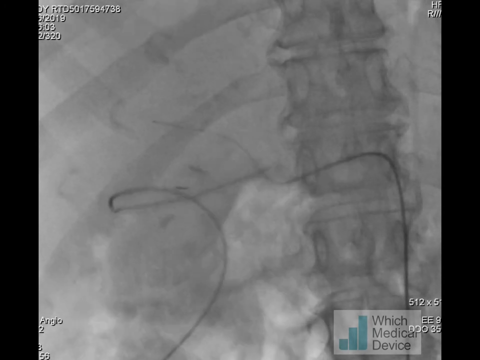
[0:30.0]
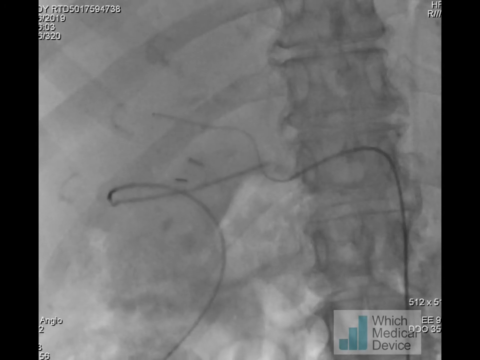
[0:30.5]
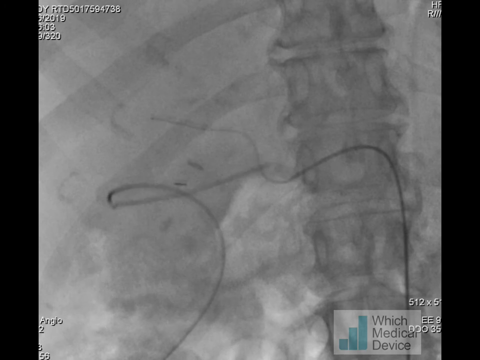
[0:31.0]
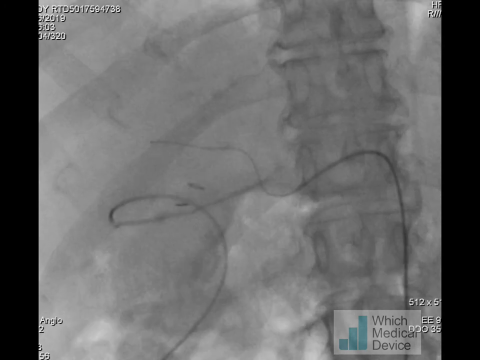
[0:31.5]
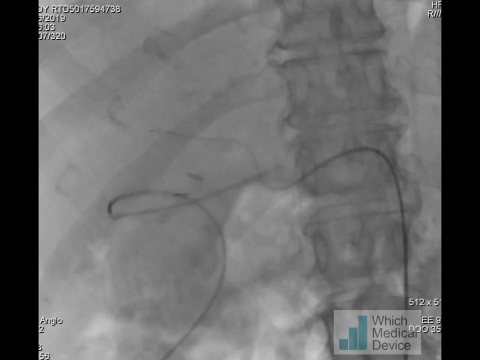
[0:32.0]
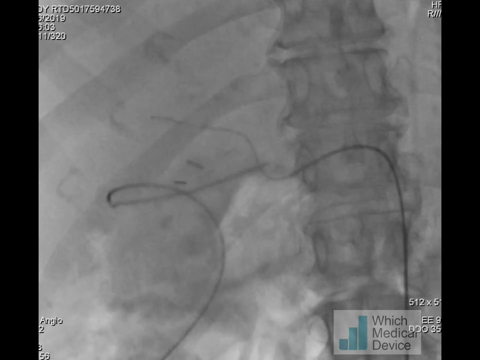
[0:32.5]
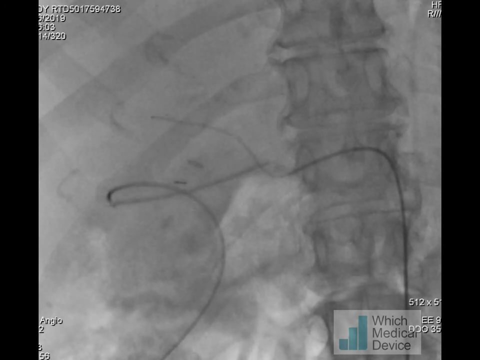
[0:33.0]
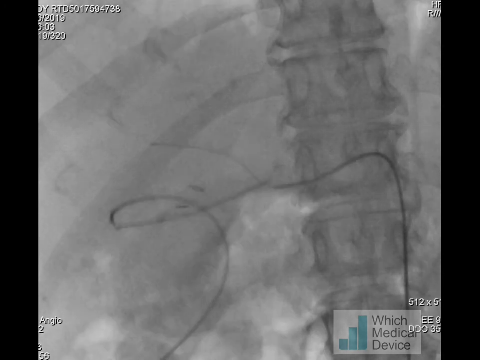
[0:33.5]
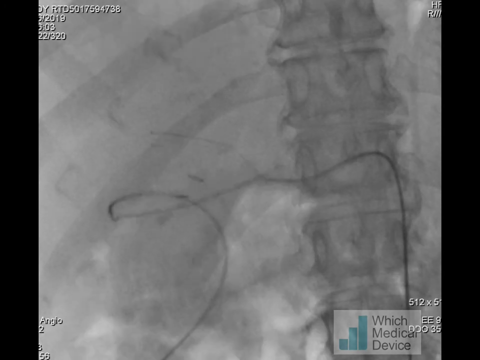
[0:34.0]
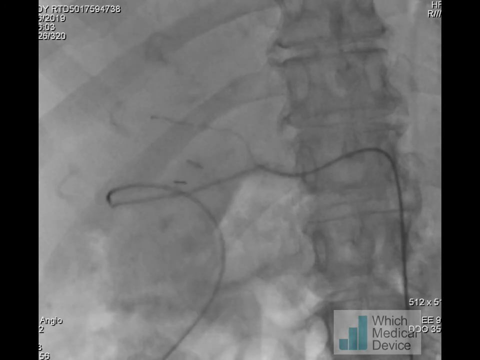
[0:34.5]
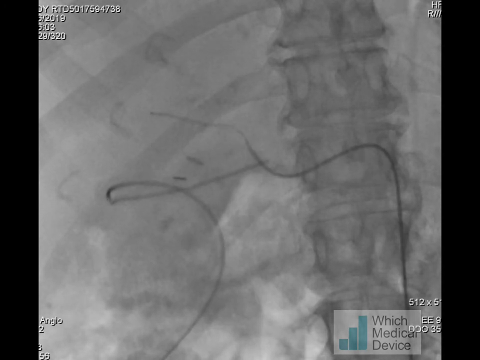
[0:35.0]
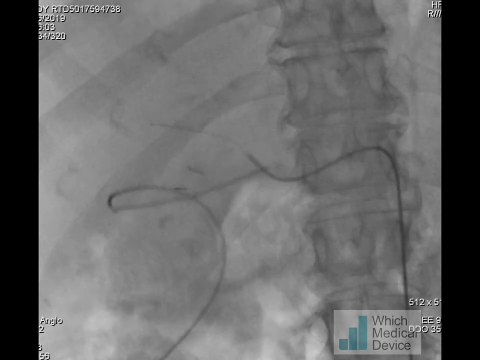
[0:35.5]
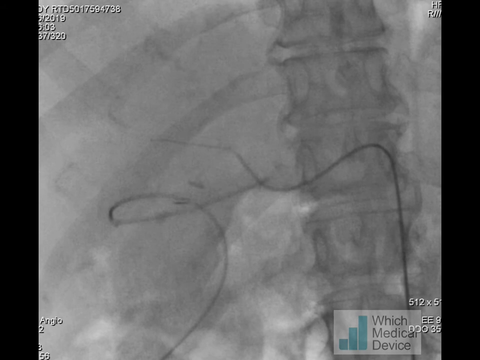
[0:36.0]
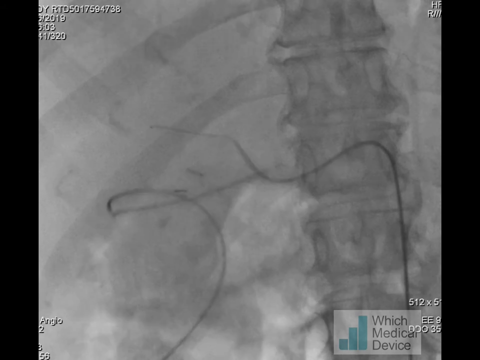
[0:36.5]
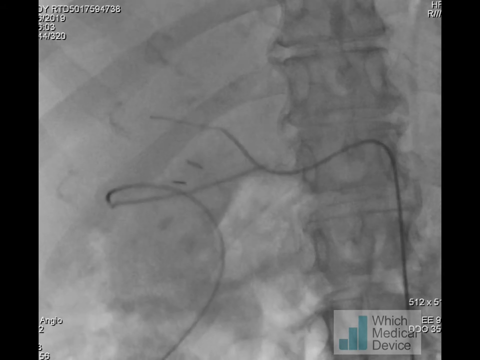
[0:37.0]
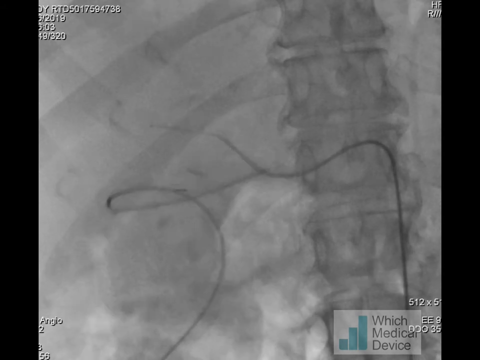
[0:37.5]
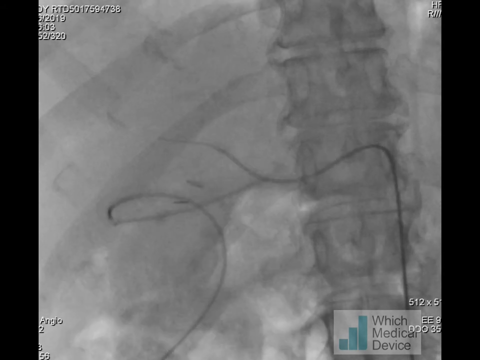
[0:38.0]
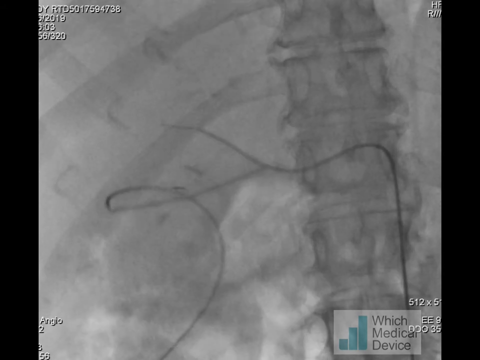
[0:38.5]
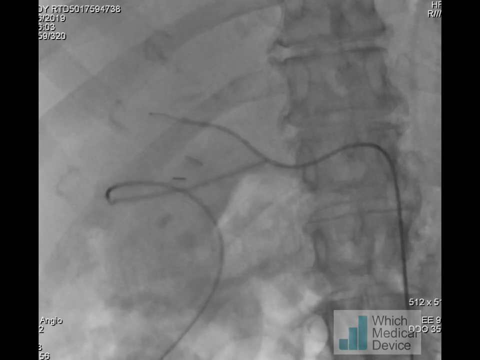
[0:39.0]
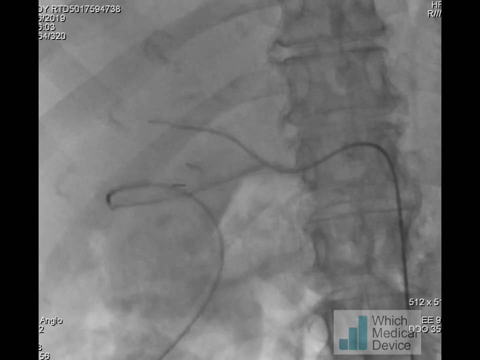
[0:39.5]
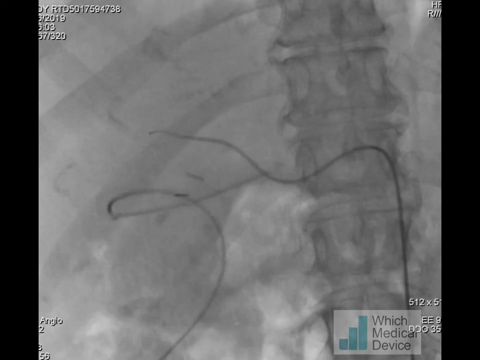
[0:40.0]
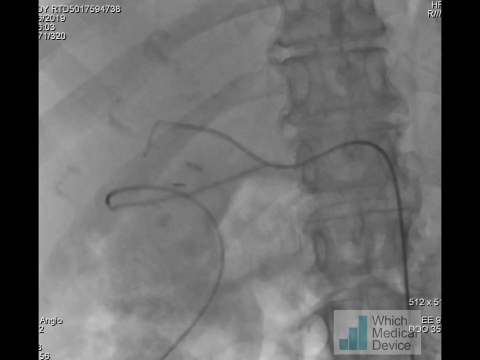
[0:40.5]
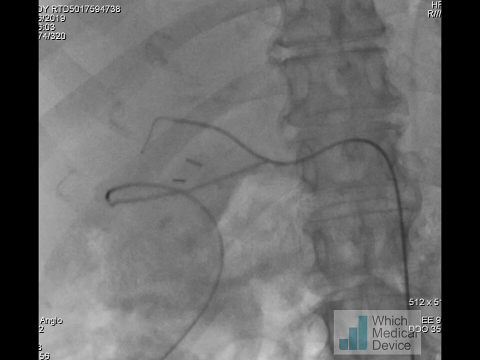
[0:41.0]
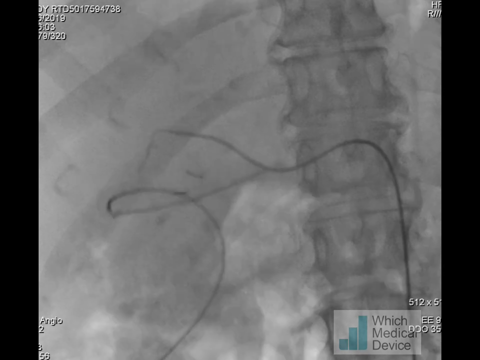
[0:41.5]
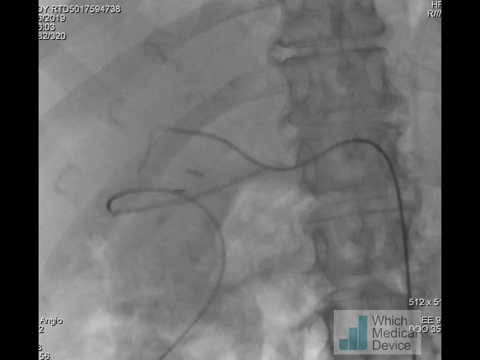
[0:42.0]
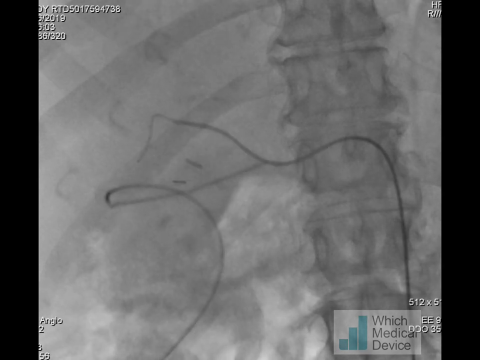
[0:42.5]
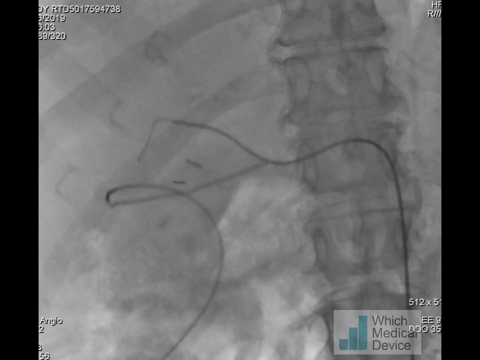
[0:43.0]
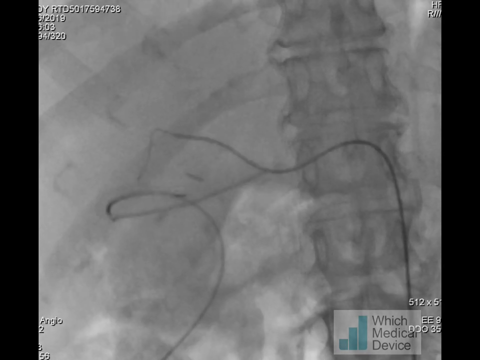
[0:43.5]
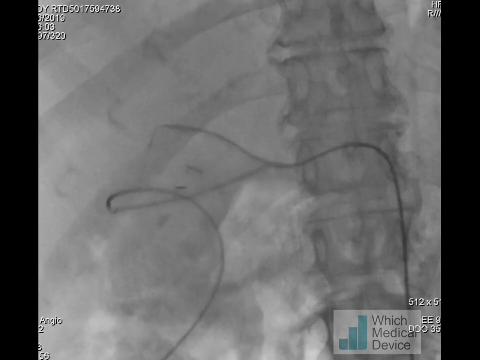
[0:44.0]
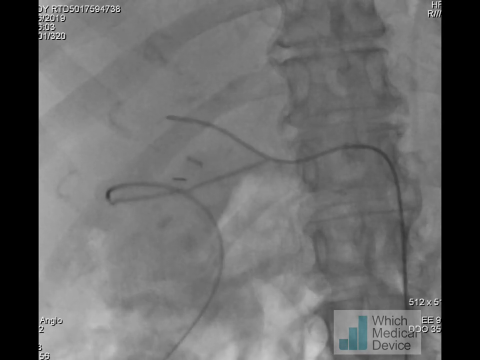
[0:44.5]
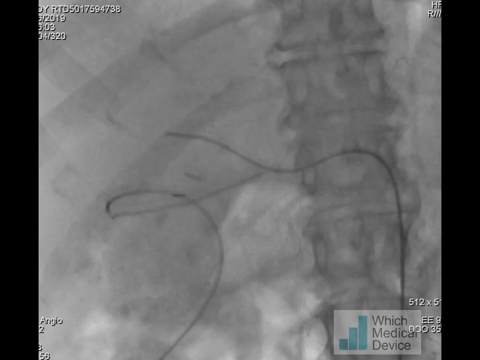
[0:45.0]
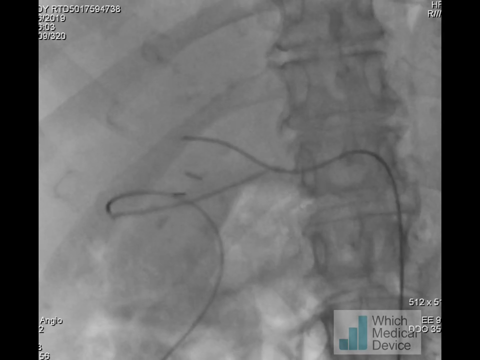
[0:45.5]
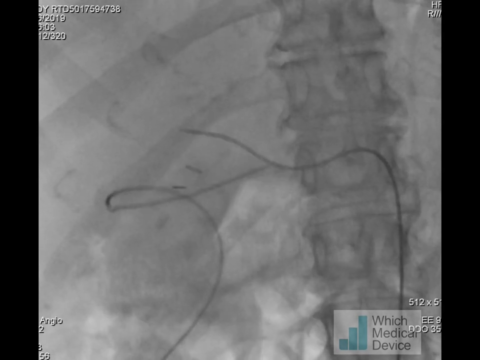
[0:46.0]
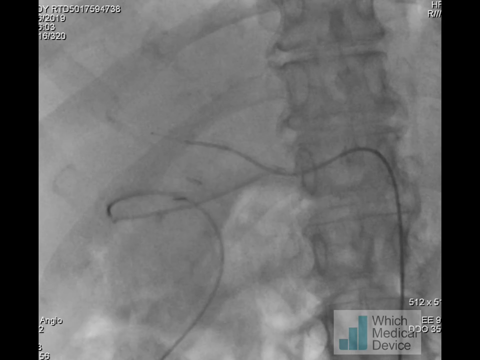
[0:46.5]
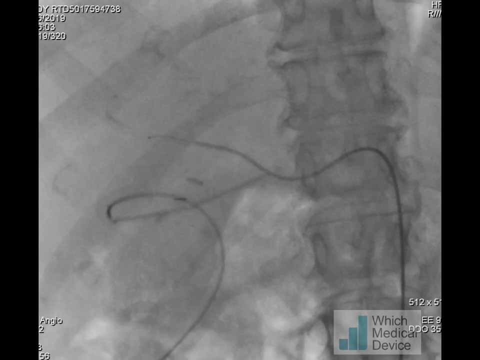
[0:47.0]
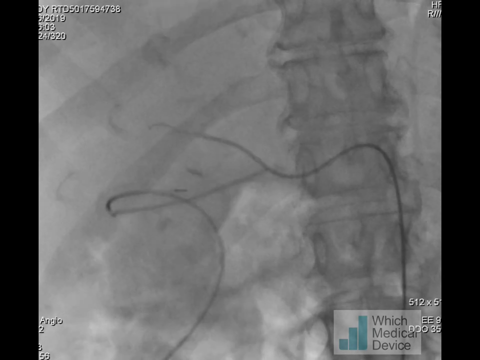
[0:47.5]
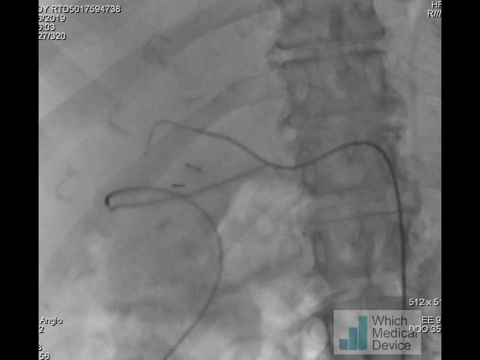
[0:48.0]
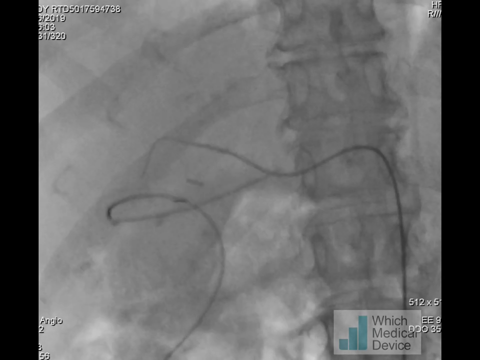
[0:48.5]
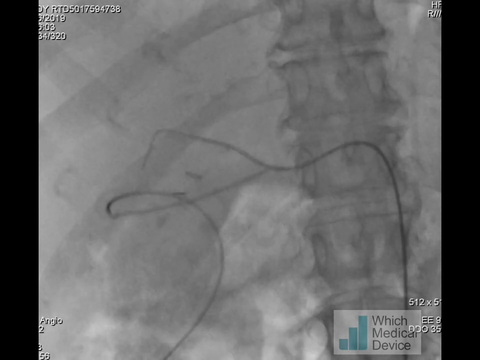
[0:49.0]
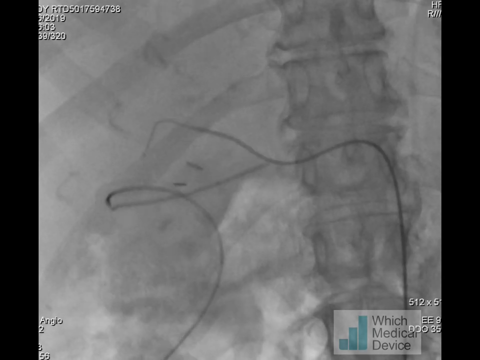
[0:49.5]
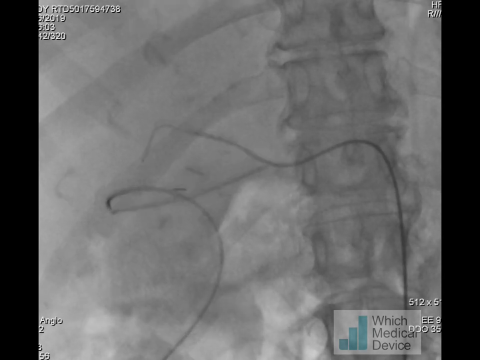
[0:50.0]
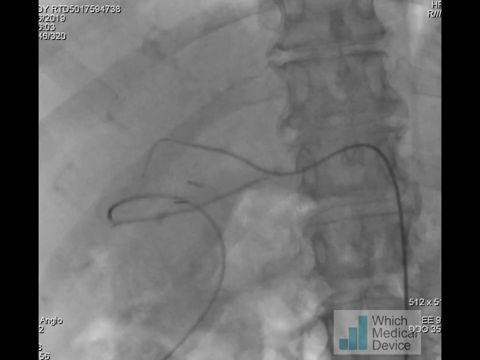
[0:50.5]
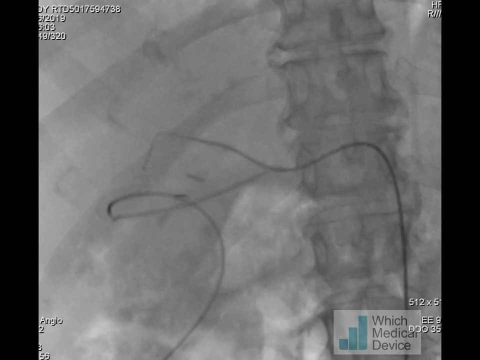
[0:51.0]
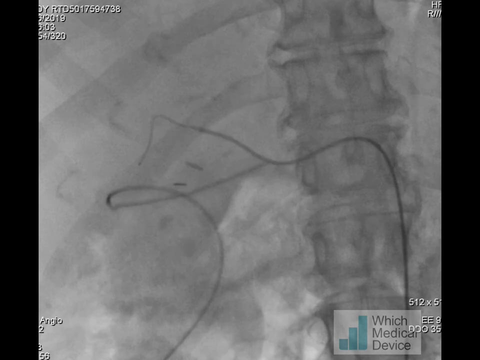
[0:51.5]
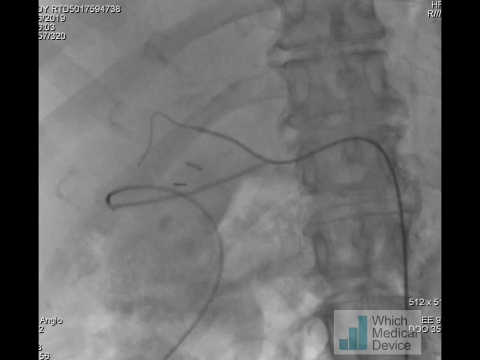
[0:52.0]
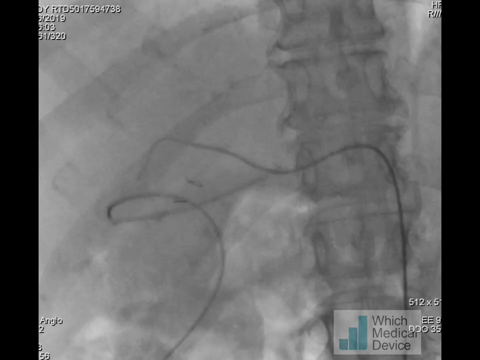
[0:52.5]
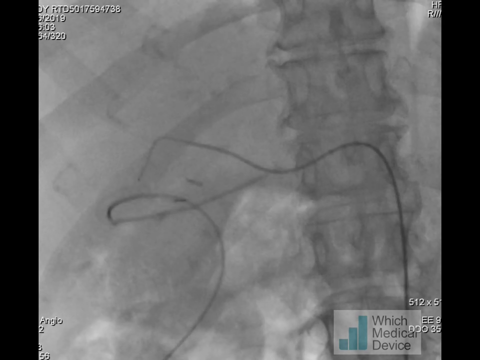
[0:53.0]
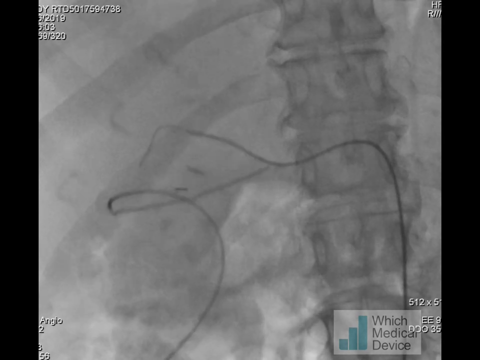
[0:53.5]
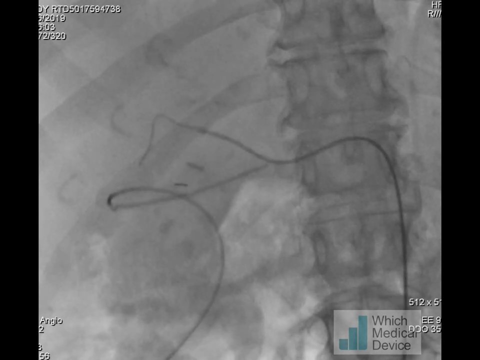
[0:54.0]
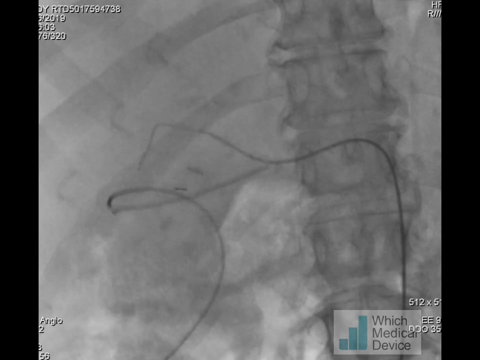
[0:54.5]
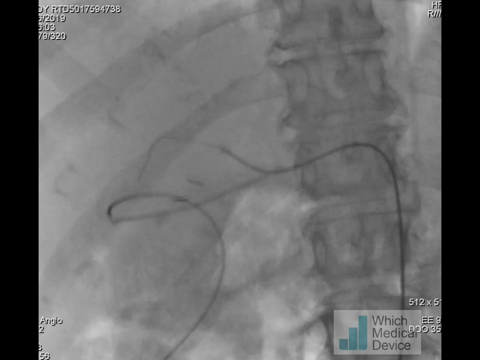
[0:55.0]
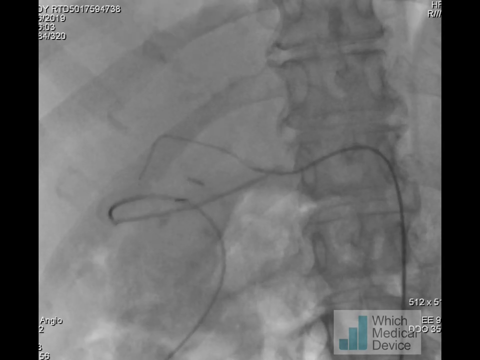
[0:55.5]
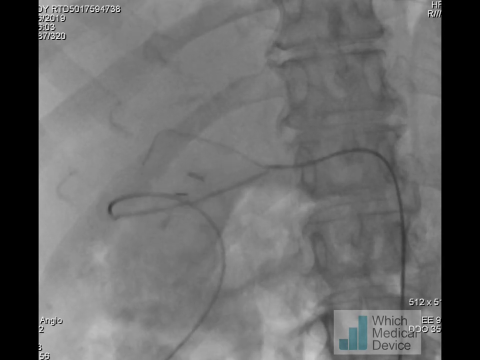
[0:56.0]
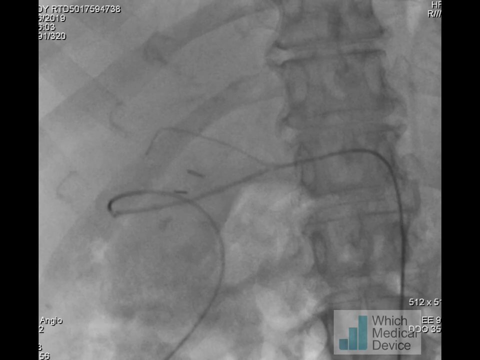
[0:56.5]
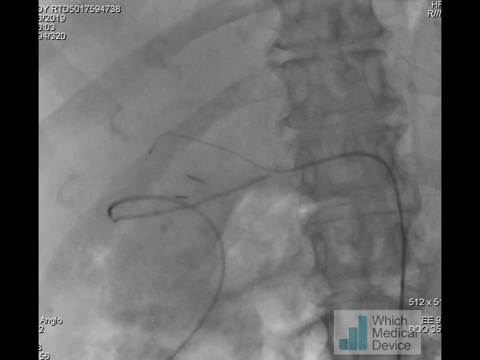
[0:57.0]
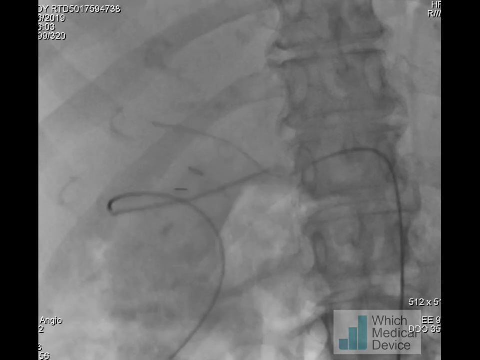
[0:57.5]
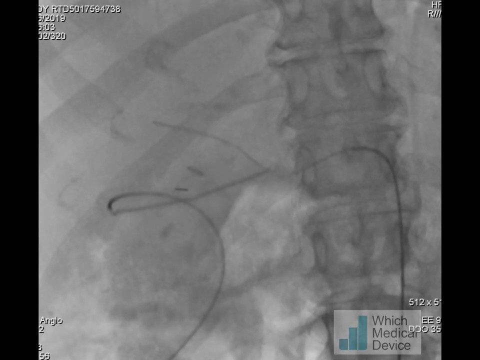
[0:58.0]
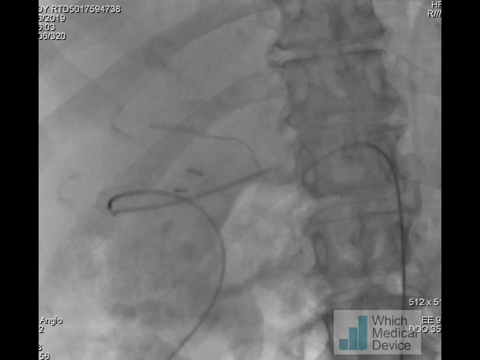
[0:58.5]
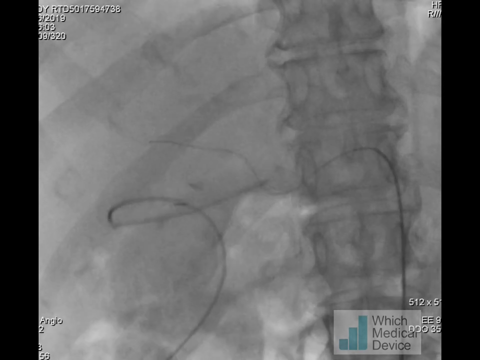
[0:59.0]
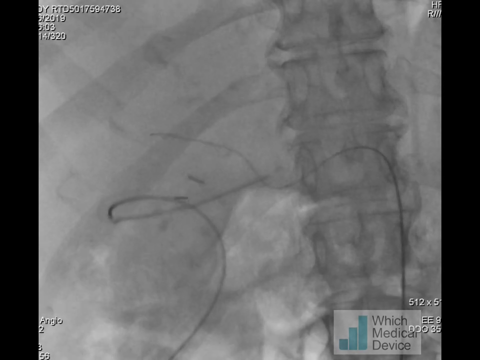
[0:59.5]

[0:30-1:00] A dark string moves up and down near the spine area on what is either a CT scan or an MRI. It almost looks like someone is moving it, or it could be moving with breathing. The string forms a curlicue on the left; in the middle and on the right it is a plain string that goes up, slides down a little, curves around up, and then runs down the whole length of the right side to the bottom. Text in the lower corner identifies the medical device, and a measurement reads "512 x 500", with the rest cut off by the edge of the frame. There are numbers at the top as well, showing the year 2019, the time 3:03, and another line reading "31320". Numbers and letters in the upper right corner are also cut off.